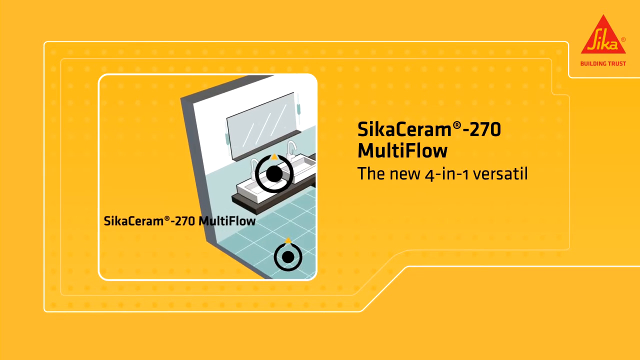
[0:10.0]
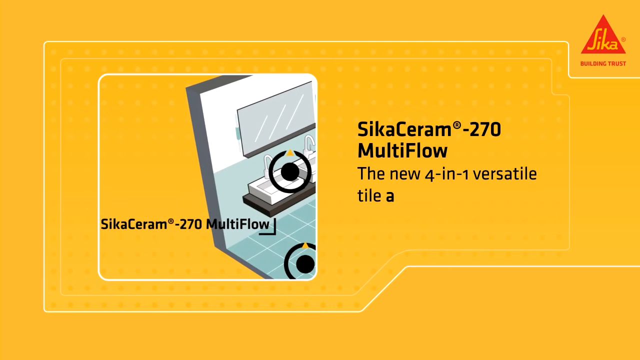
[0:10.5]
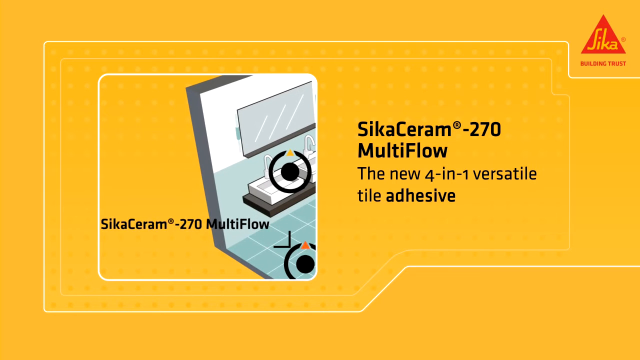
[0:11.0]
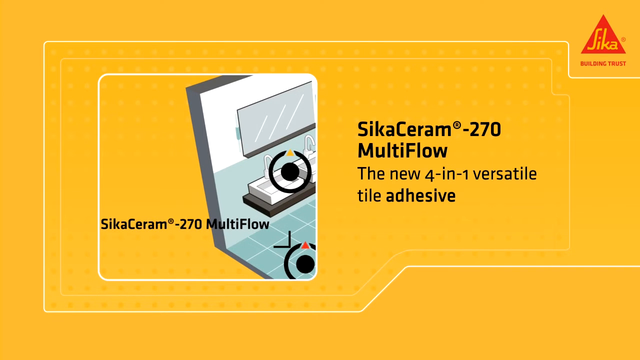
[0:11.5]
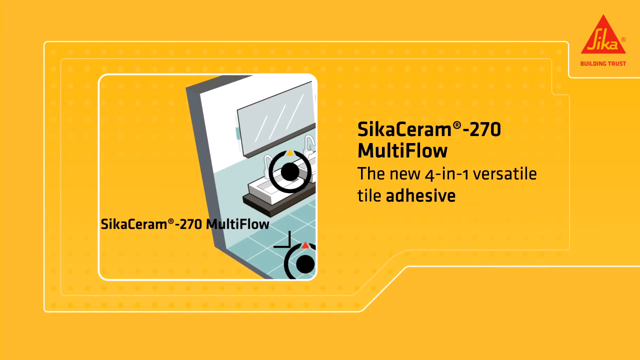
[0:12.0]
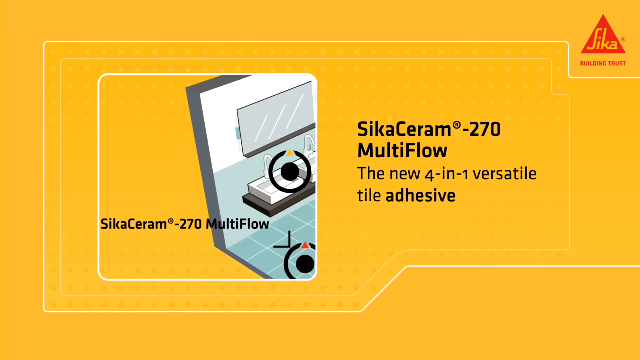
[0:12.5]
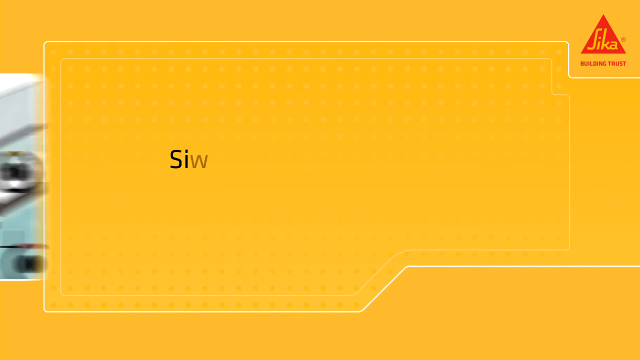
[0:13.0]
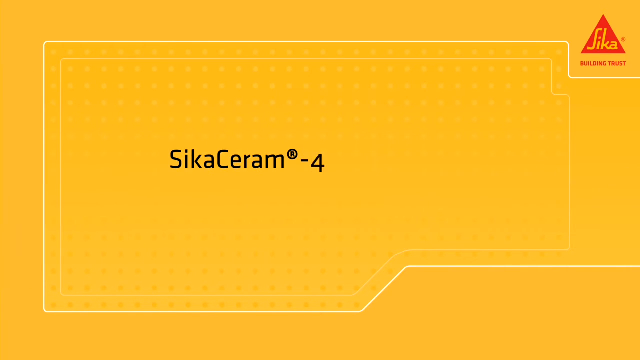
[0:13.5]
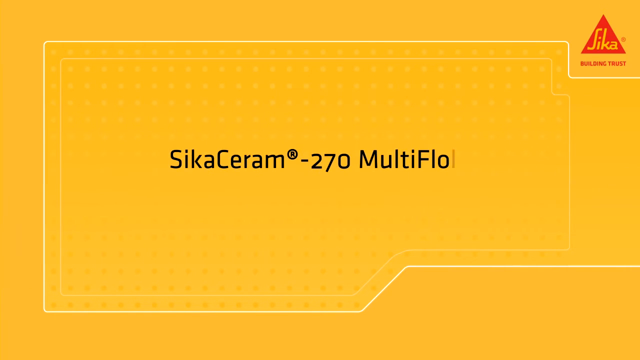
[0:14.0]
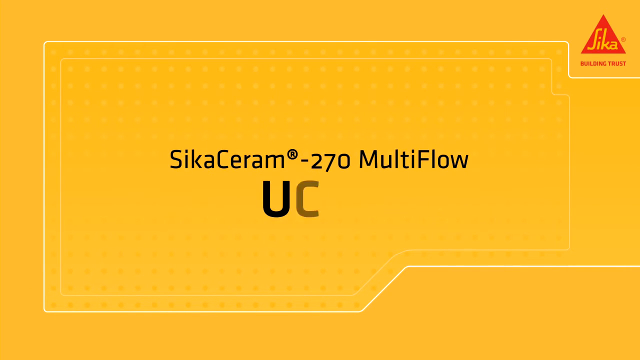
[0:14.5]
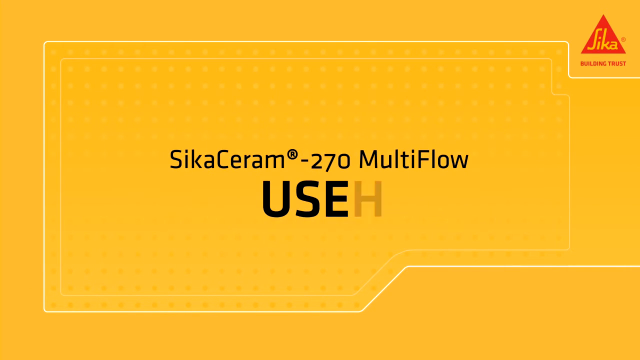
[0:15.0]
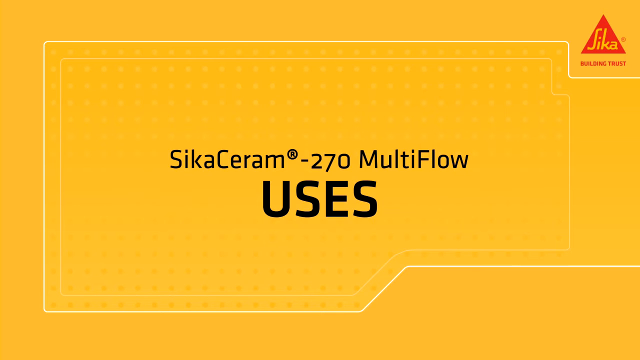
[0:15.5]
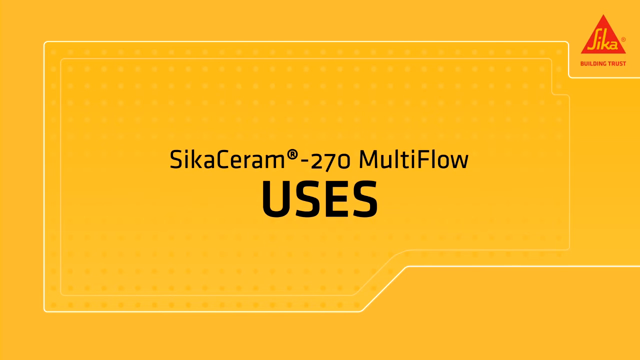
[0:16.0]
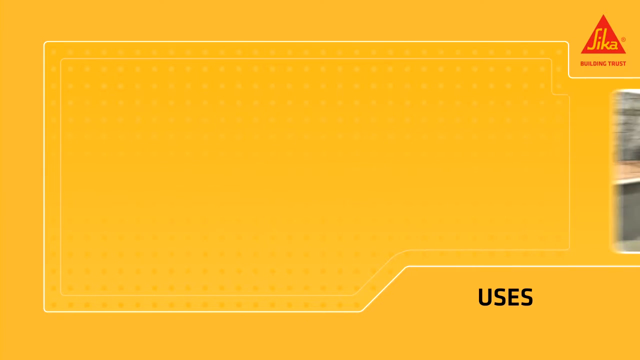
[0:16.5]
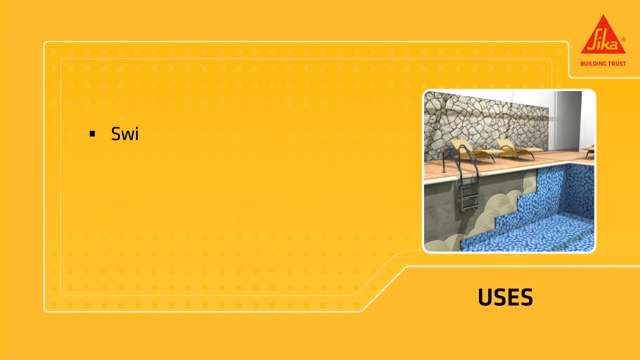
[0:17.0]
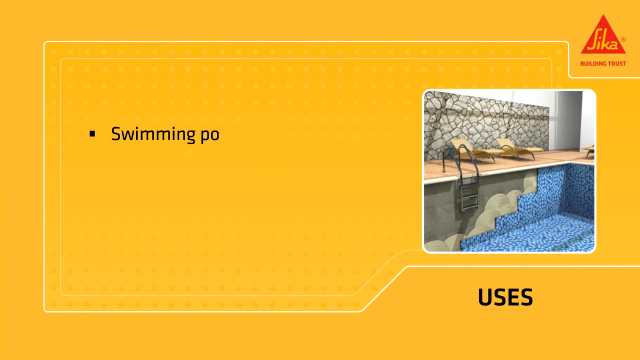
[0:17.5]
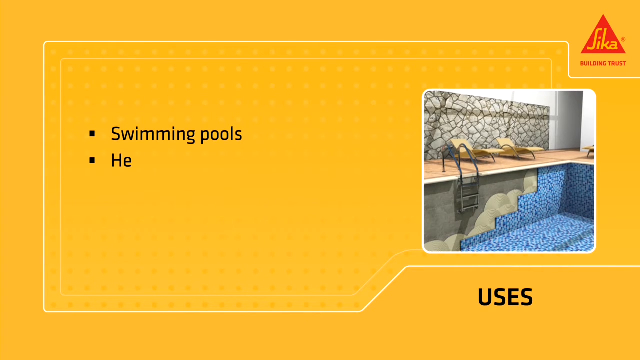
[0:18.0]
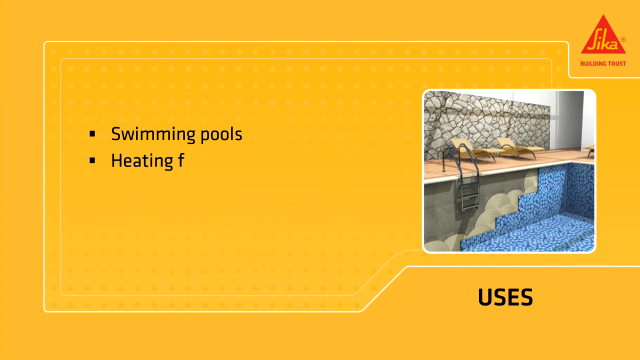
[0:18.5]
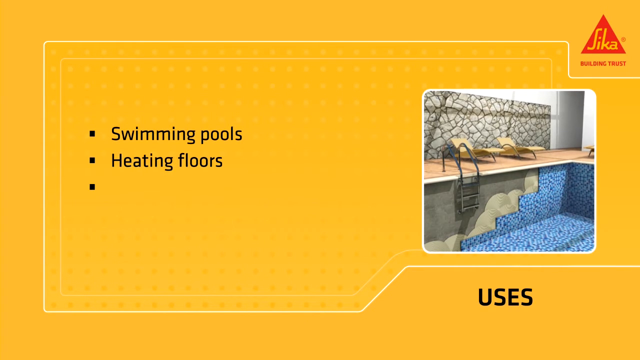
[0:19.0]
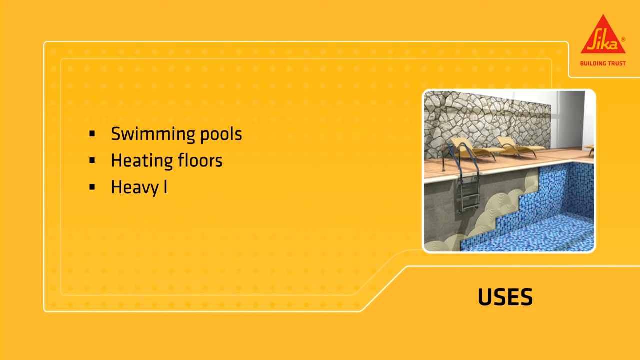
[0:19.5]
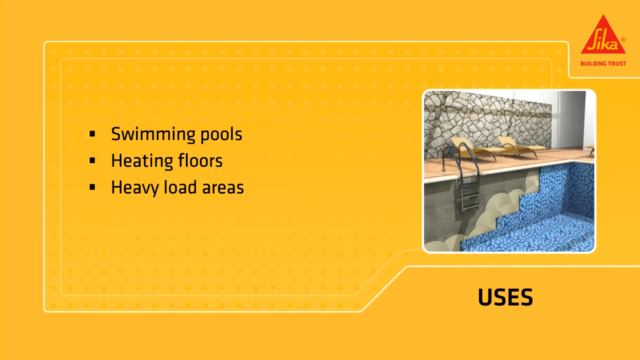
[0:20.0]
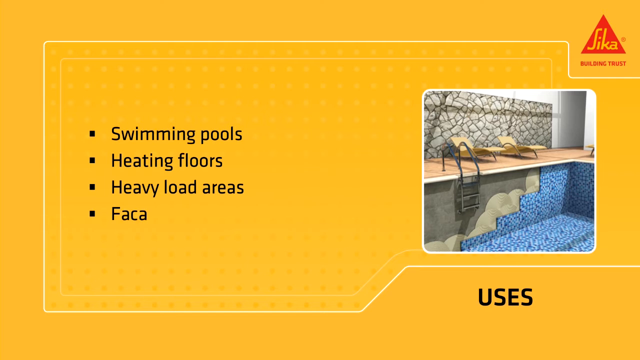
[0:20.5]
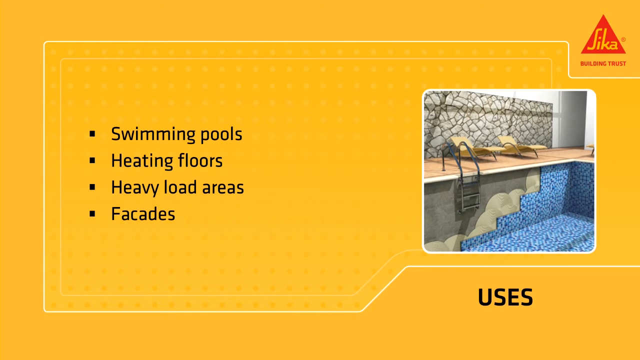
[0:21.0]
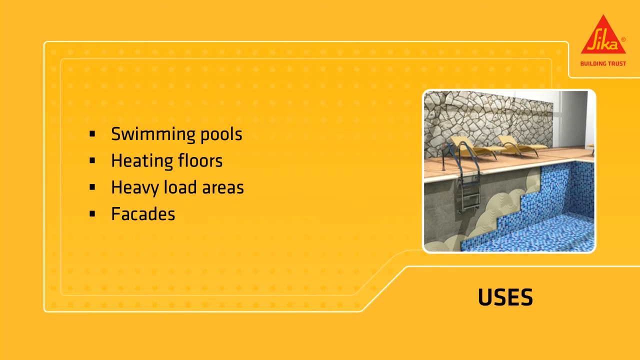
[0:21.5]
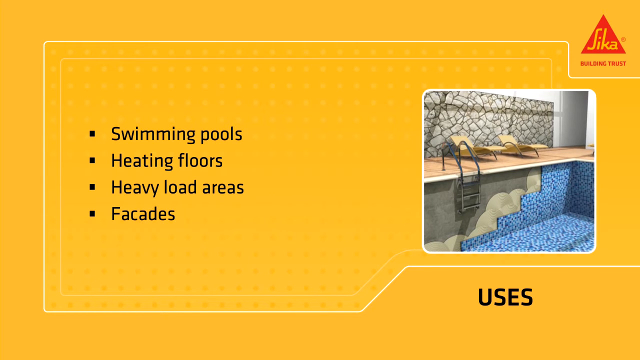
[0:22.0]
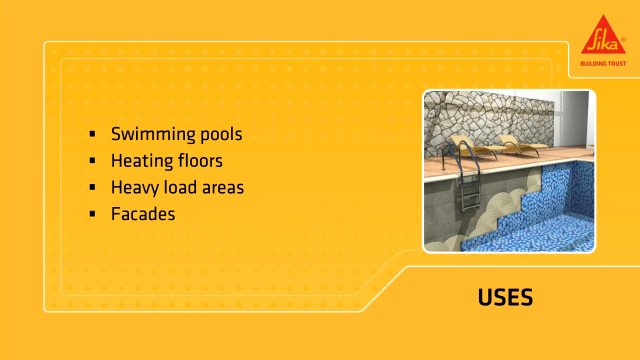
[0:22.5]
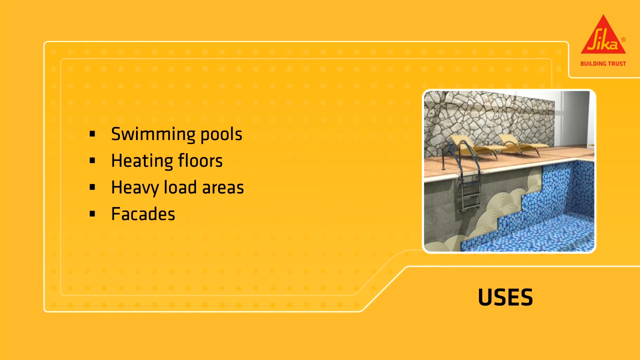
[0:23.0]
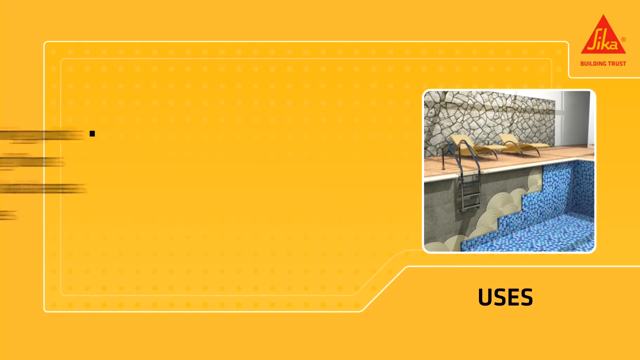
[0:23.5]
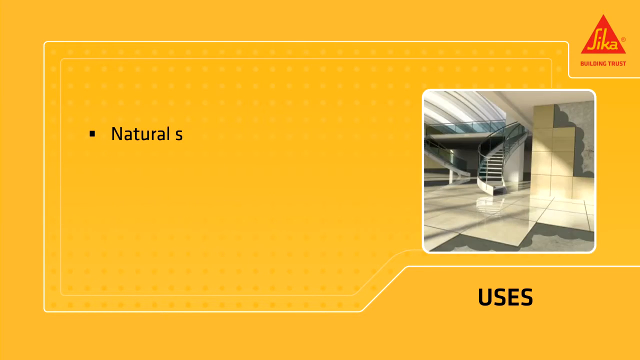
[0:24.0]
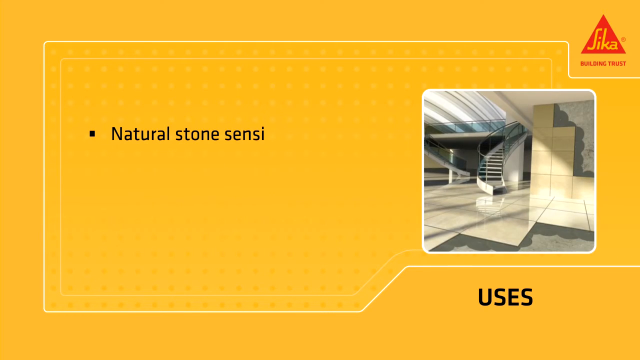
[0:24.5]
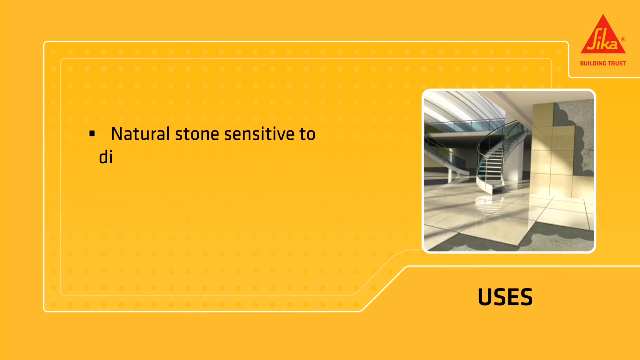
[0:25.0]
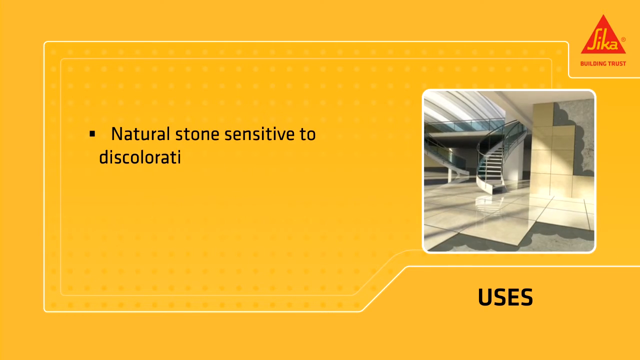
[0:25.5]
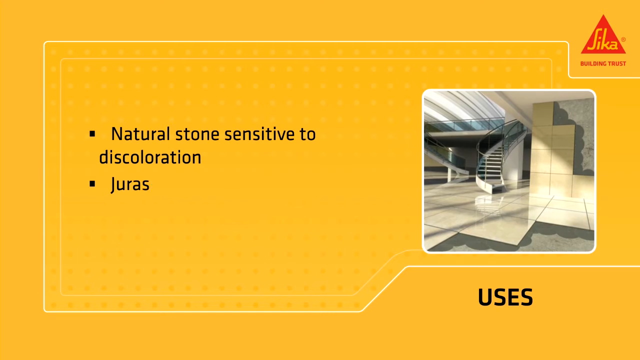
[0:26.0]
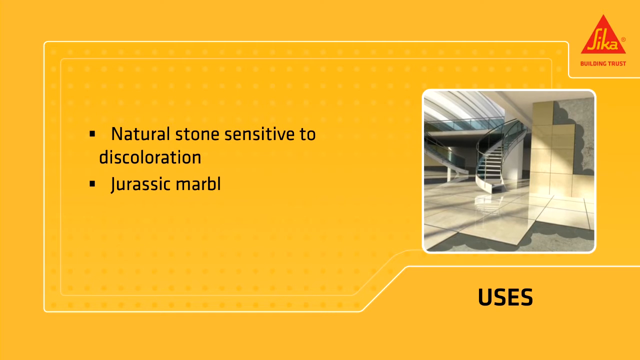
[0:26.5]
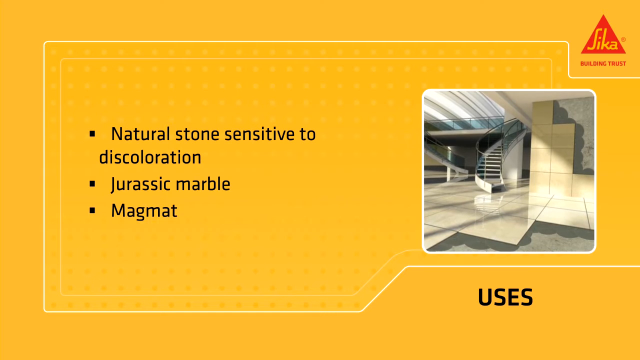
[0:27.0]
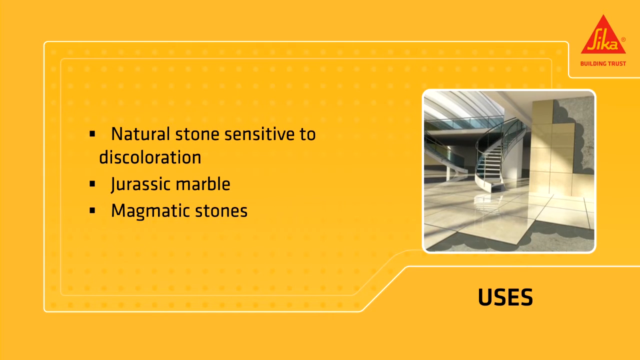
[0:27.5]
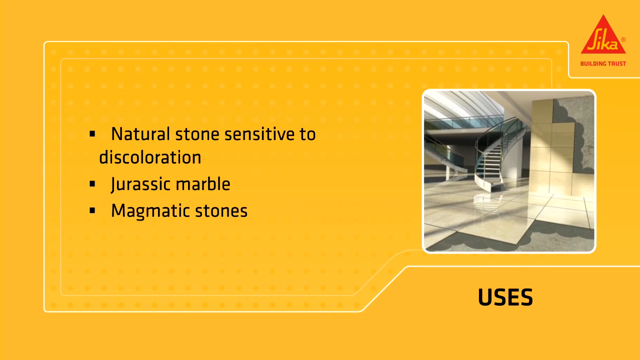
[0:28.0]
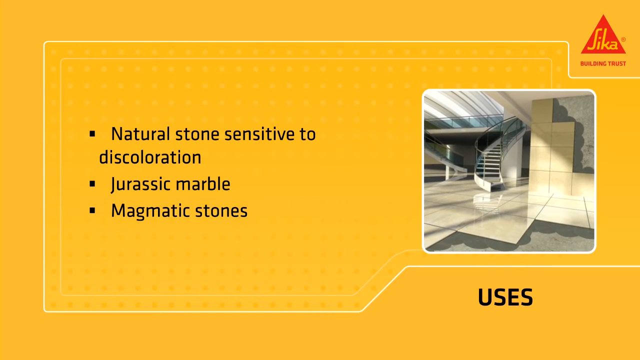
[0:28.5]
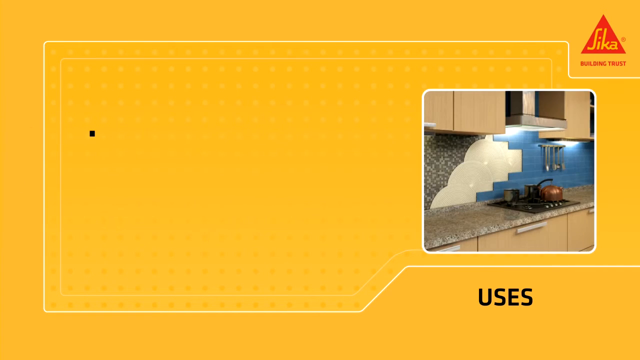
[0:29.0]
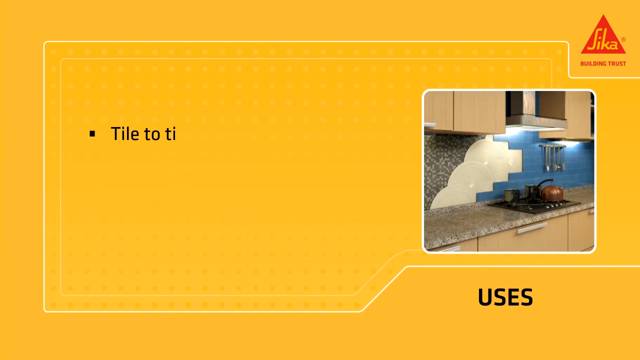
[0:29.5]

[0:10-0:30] On a yellow background, overlaid text identifies the SikaCeram 270 MultiFlow product and reads "the new 4-in-1 versatile." A diagram on the left side zooms in on the grout on the floor in front of the sink, which is highlighted with a red arrow and a small black mark pointing that way. Everything leaves the screen and the words "SikaCeram 270 MultiFlow uses" come on; the letters cycle from A to Z and stop on U to spell "uses." The next screen lists where the product can be used. On the right is a computer-generated drawing of what looks like a swimming pool, partly tiled, with two chairs on the side and a ladder; the pool has no water and tiles are being applied. The text reads "swimming pools, heating floors, heavy load areas, facades." This moves away to the left and more of the list appears: "natural stones sensitive to discoloration, Jurassic marble, magmatic stones." That goes away and "natural stone sensitive" appears.